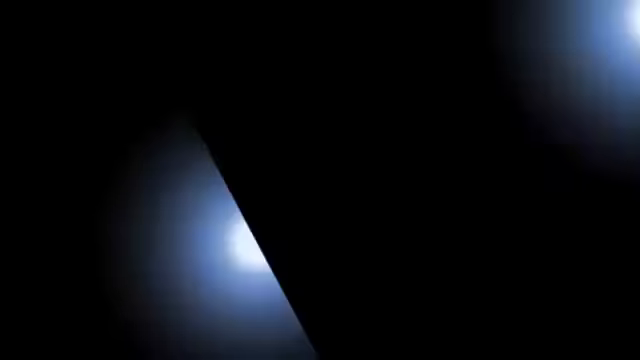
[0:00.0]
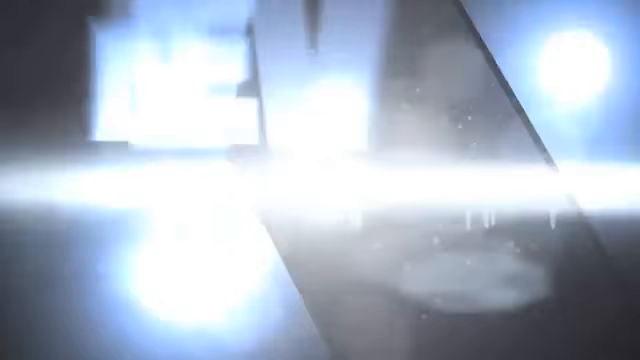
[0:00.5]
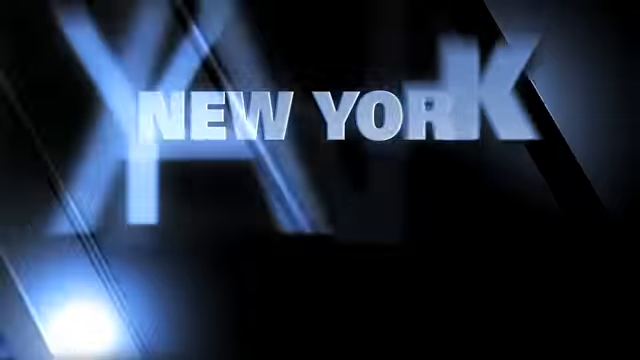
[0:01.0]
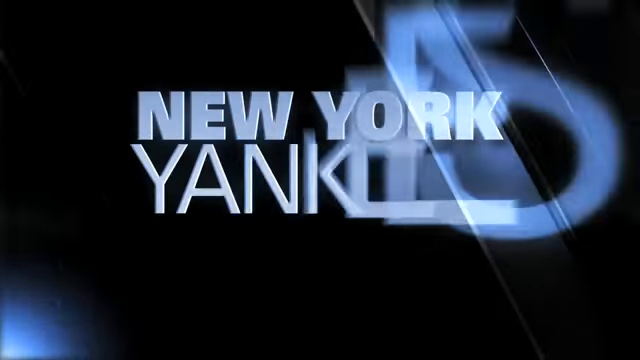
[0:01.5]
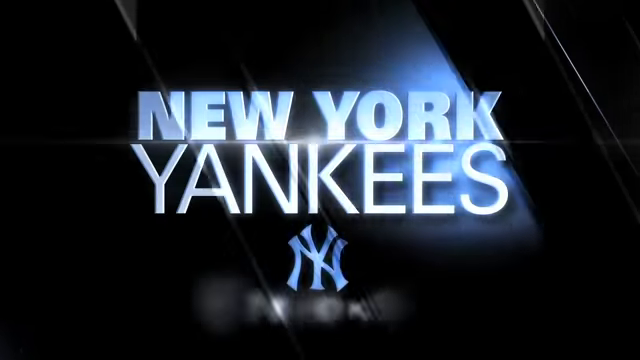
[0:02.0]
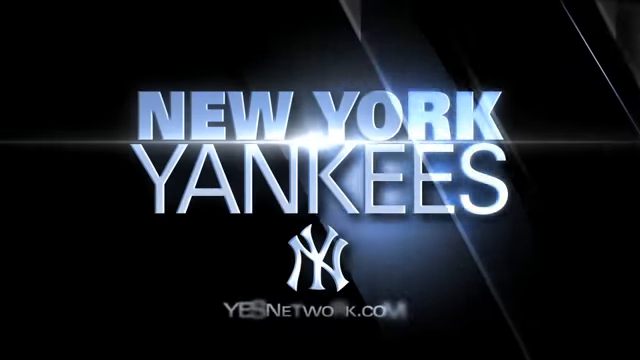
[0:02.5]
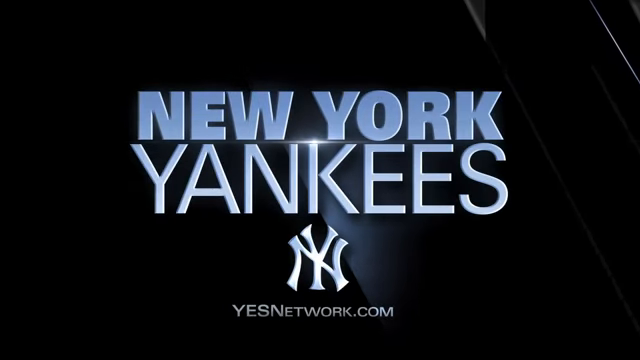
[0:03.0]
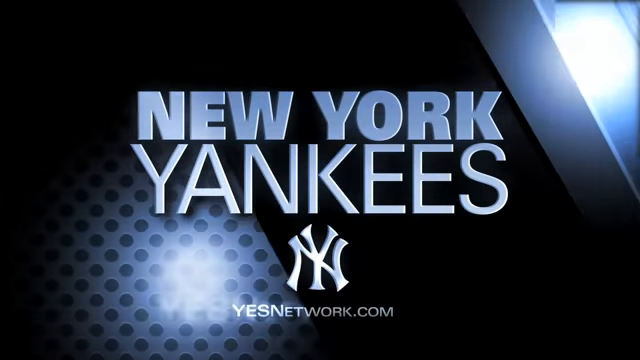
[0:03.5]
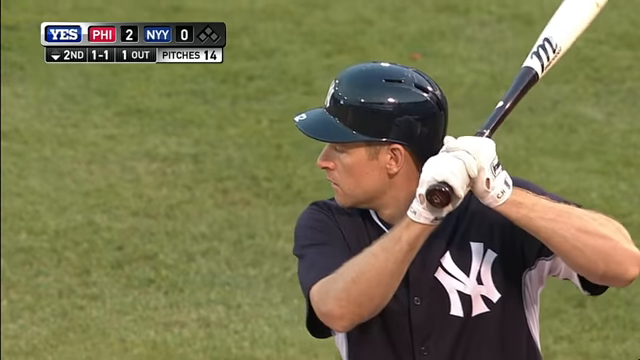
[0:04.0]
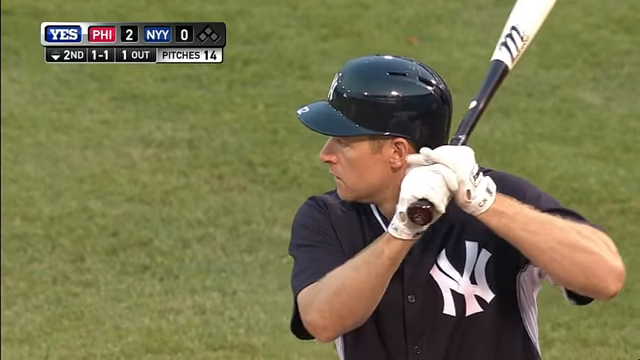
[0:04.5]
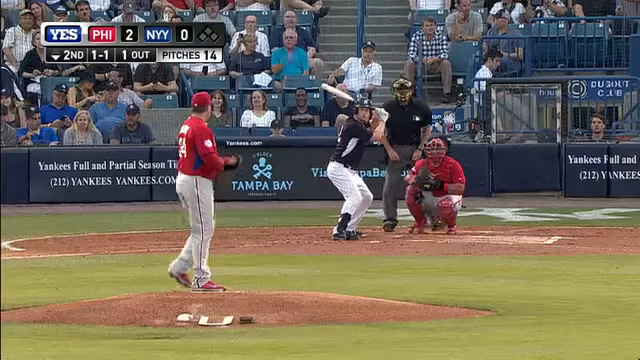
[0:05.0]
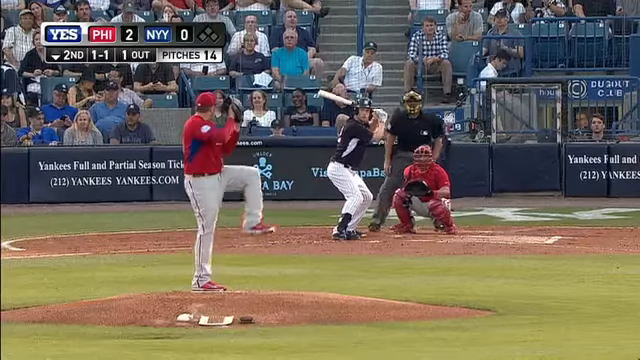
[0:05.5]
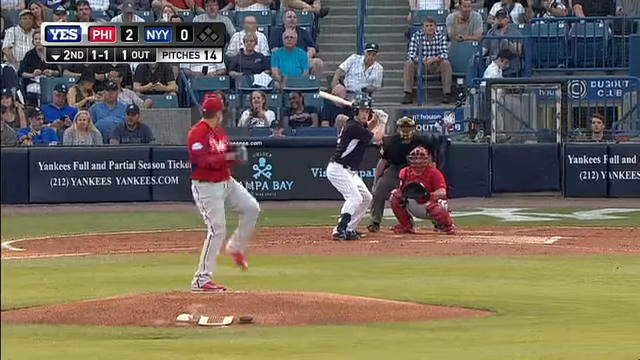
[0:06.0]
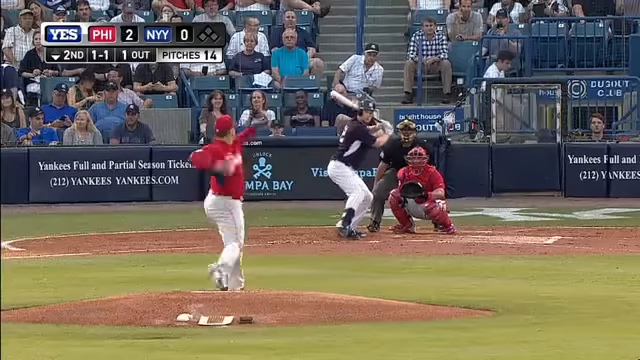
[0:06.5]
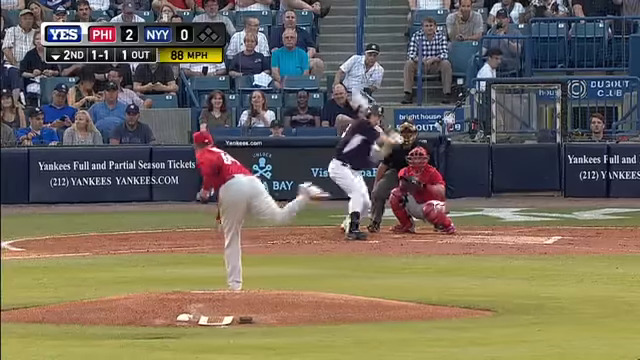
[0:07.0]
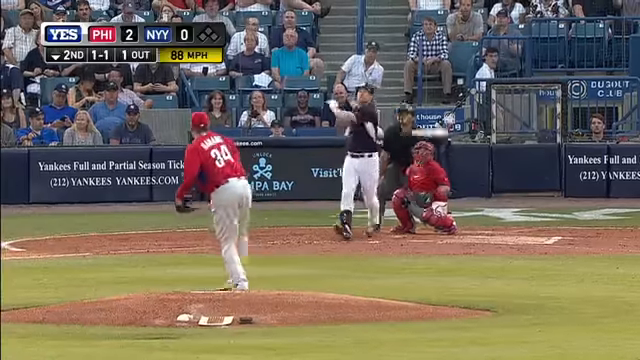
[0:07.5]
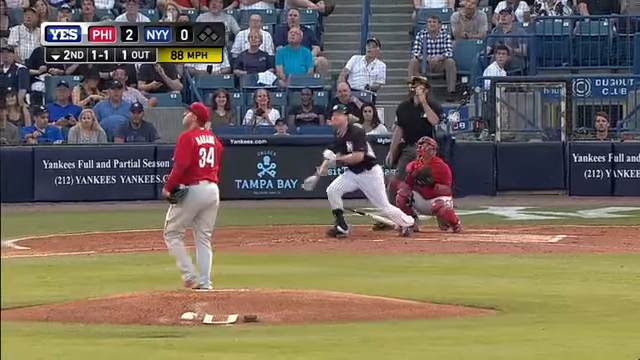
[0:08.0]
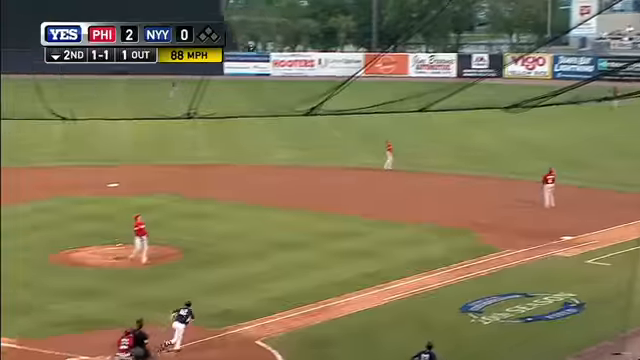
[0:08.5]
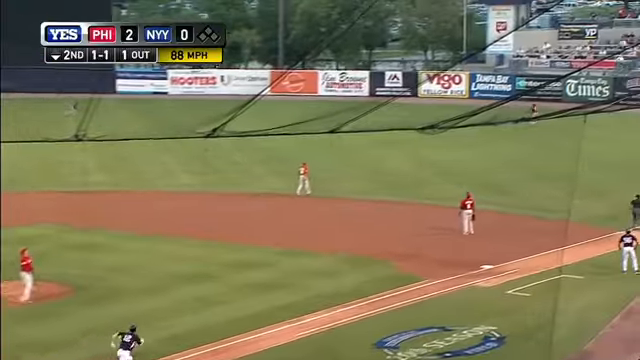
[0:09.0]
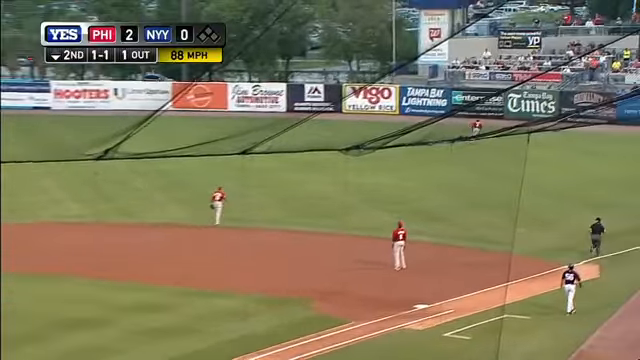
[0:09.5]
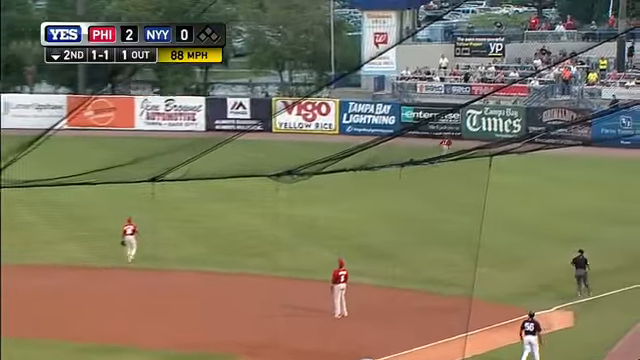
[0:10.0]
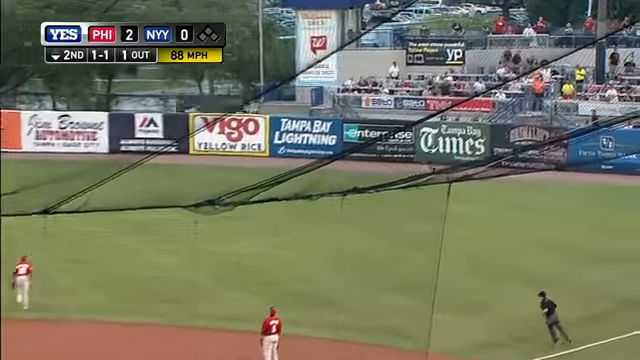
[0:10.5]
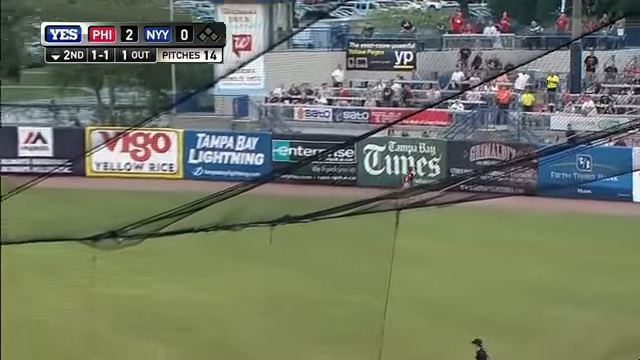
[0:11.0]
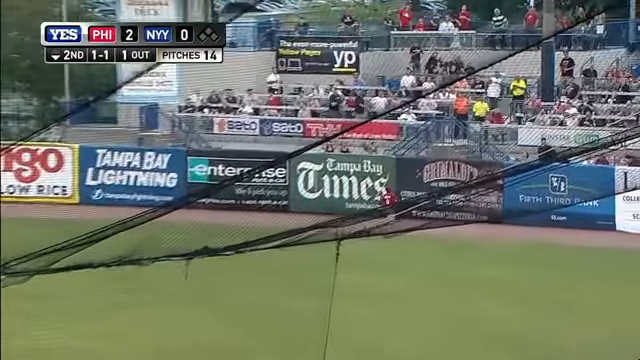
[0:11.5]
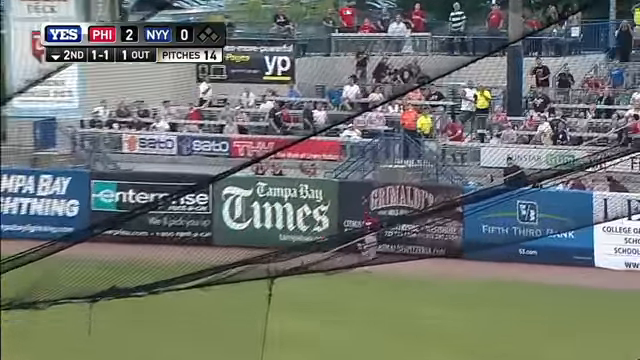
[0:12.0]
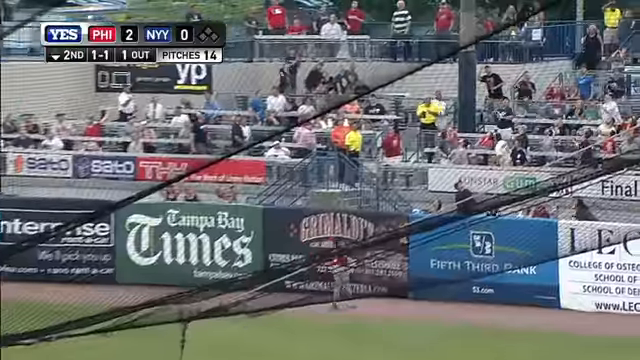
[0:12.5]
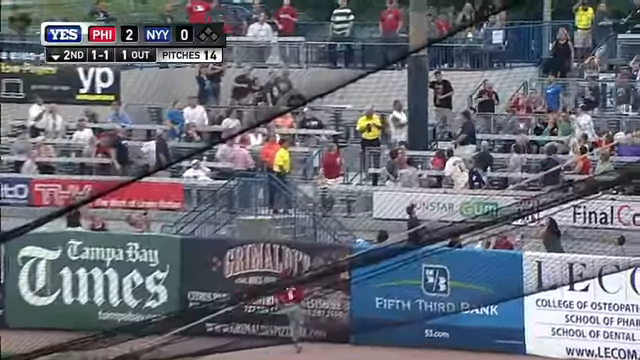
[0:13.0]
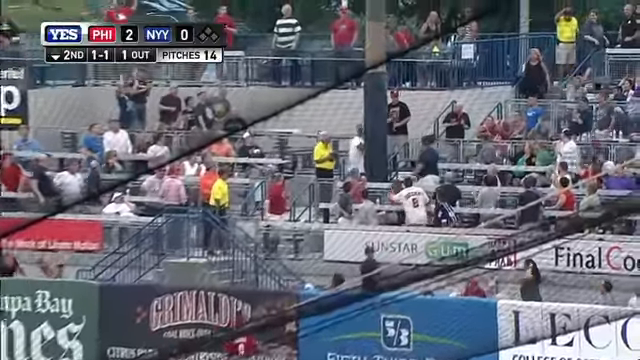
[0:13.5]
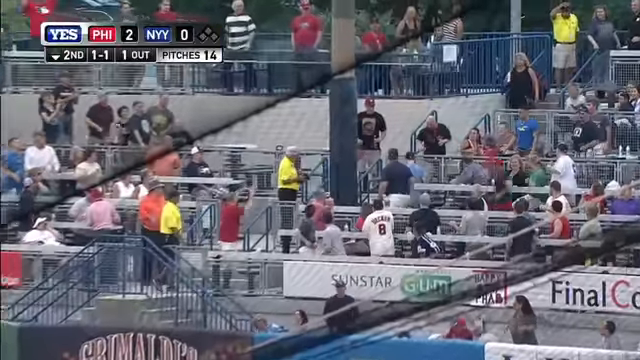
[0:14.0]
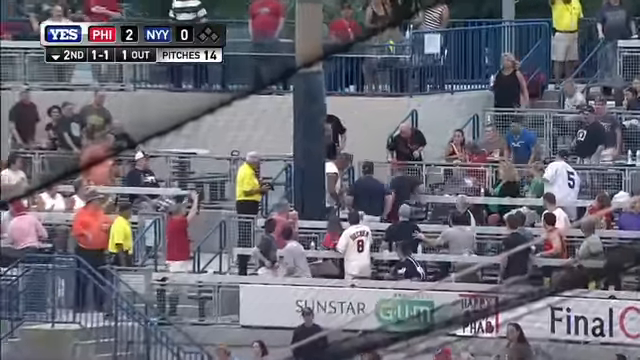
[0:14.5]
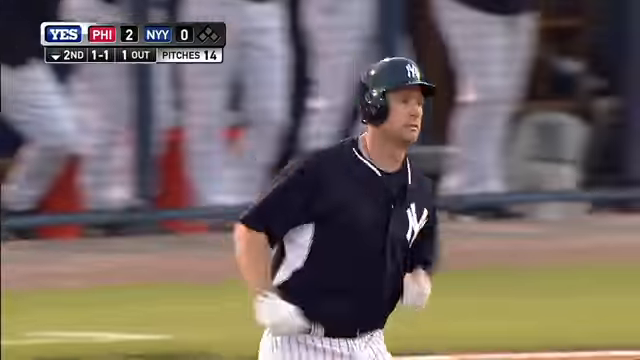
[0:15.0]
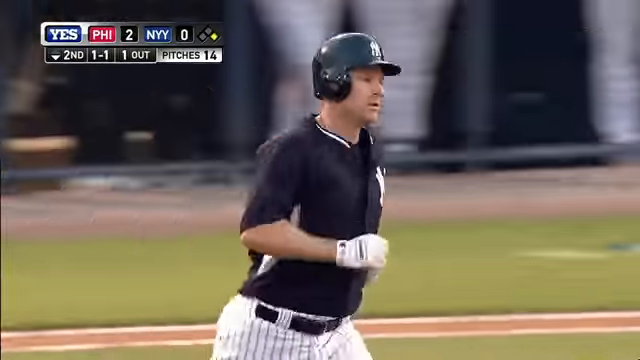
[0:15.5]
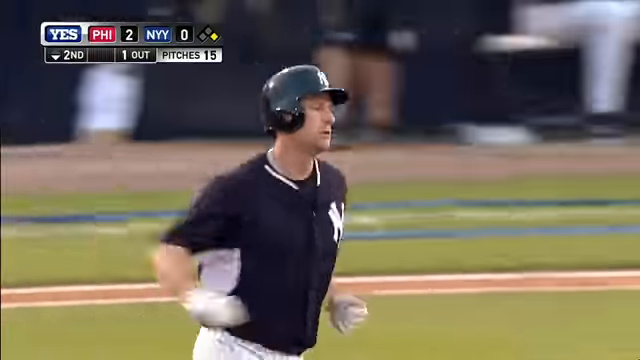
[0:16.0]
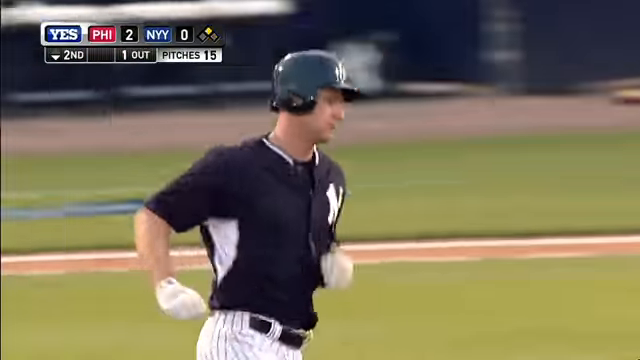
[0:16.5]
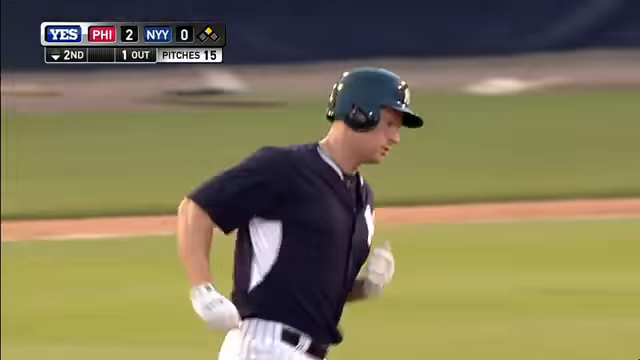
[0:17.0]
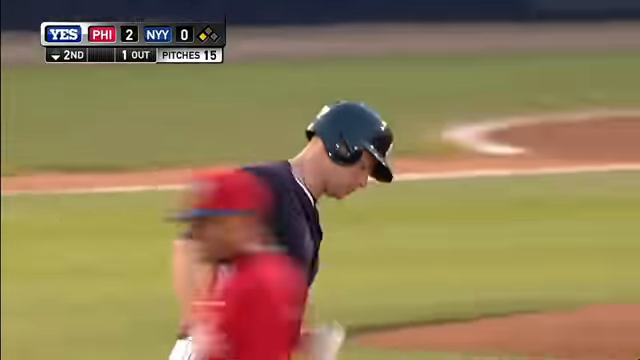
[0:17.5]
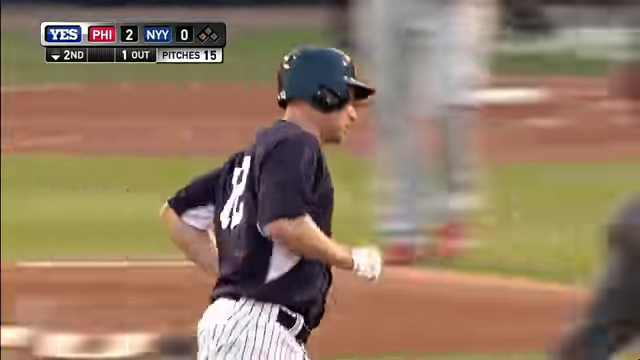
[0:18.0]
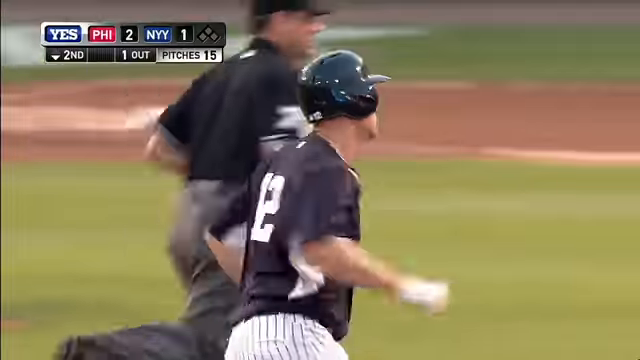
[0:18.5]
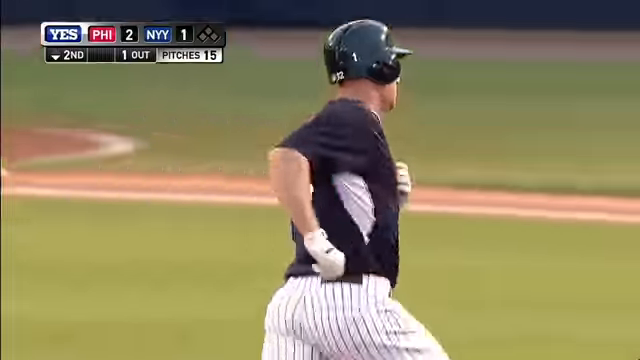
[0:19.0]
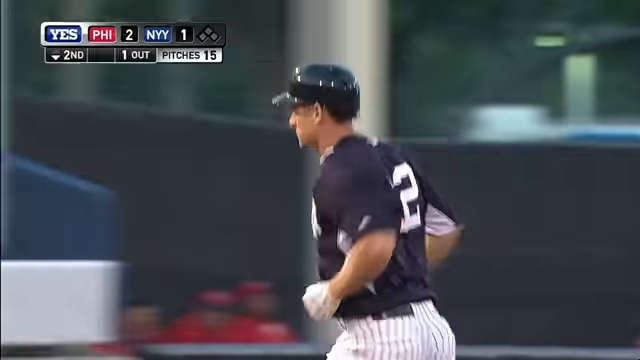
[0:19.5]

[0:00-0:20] A black screen shows the words "New York Yankees", and a New York Yankees match follows, apparently against the team from Philadelphia. The score is 2 to Philadelphia and 0 to the New York Yankees. The Philadelphia pitcher pitches to a New York Yankees player, and player number 12 hits the ball completely out of the ground, with no chance for any of the Philadelphia players to catch it. The ball goes into the crowd, and the crowd looks for it. The New York Yankees player, in a blue shirt and white trousers, leisurely takes his time running around the pitch without having to run fast. The crowd goes wild and everyone is excited.